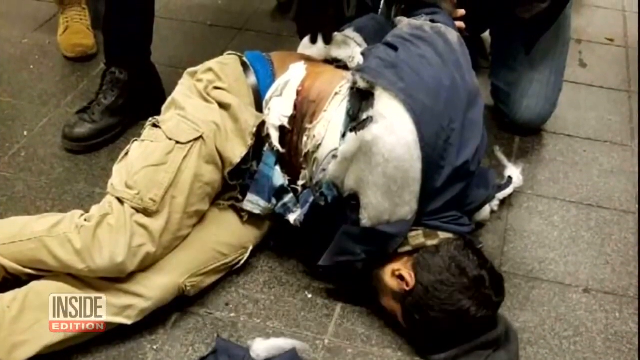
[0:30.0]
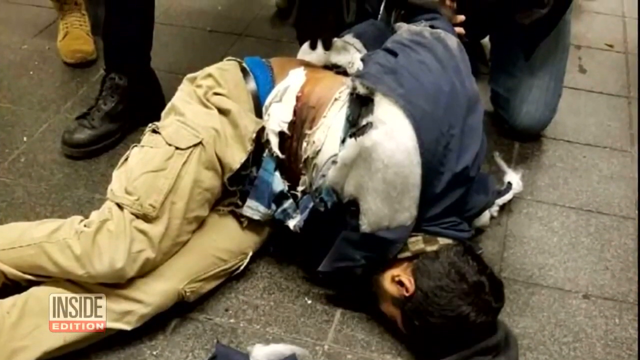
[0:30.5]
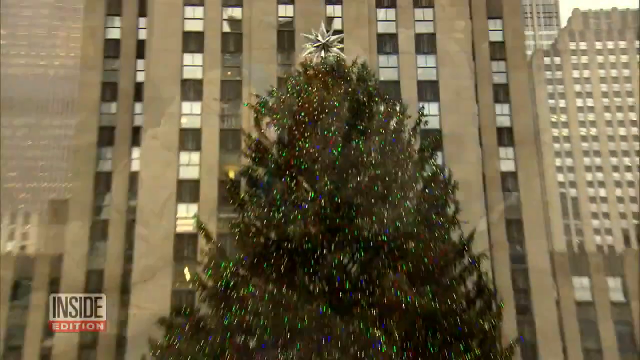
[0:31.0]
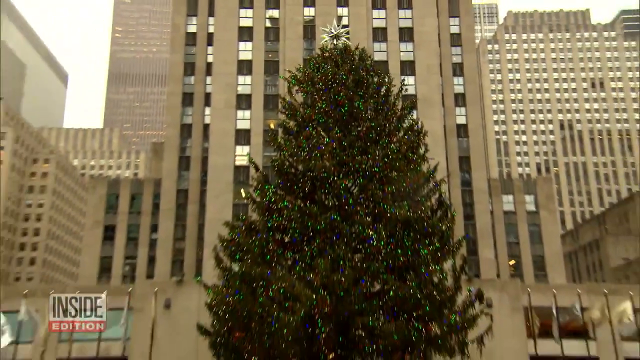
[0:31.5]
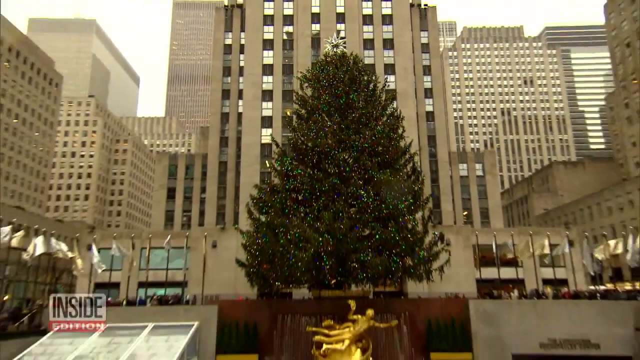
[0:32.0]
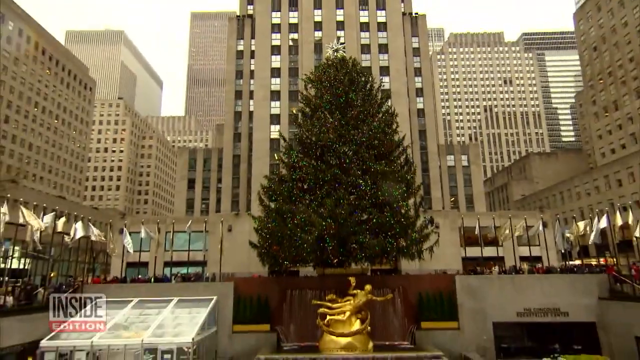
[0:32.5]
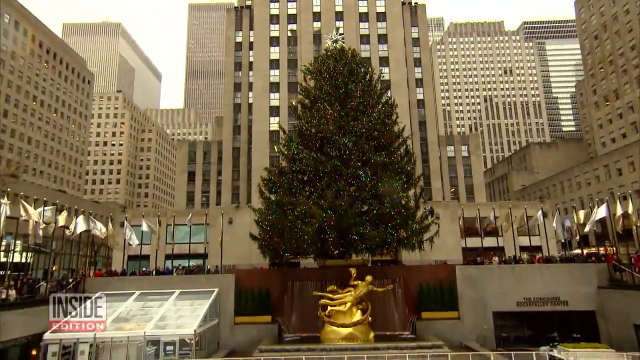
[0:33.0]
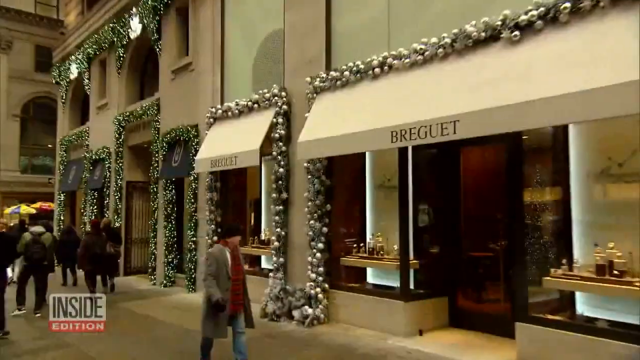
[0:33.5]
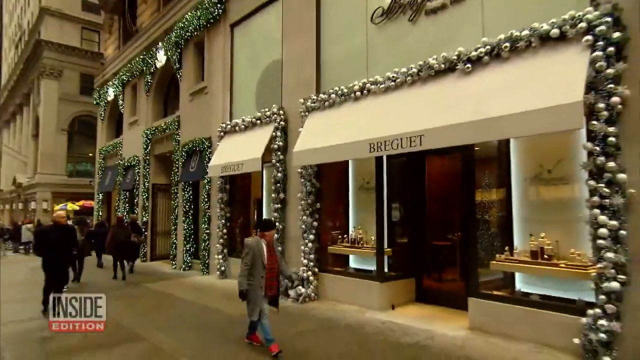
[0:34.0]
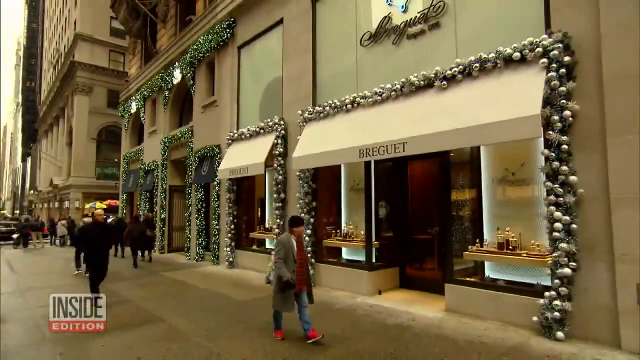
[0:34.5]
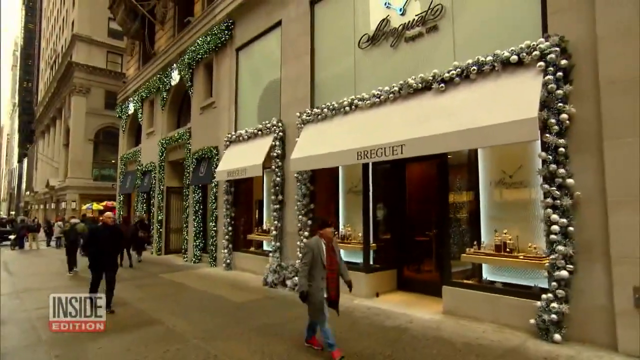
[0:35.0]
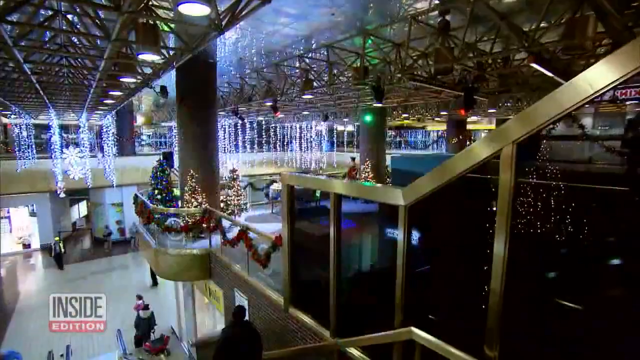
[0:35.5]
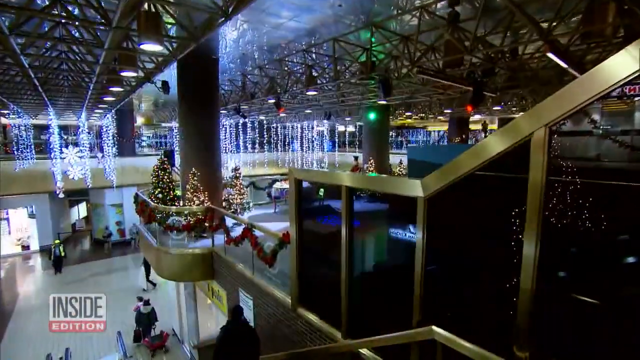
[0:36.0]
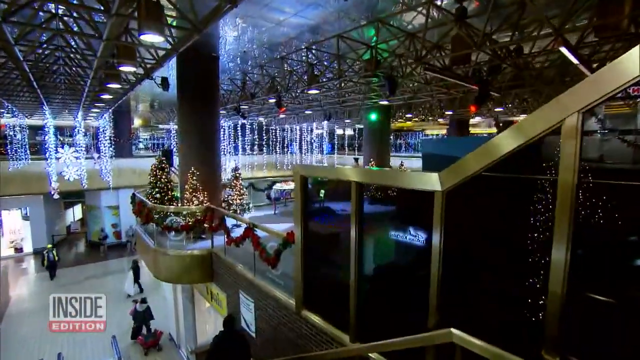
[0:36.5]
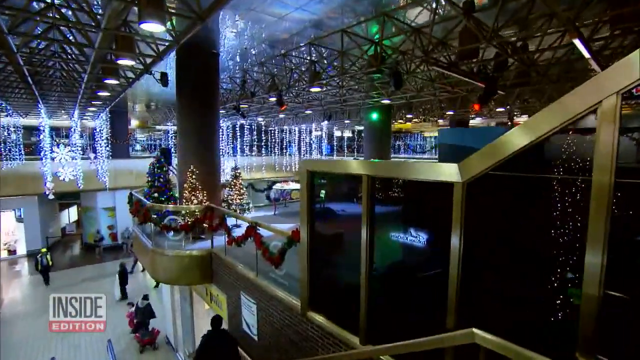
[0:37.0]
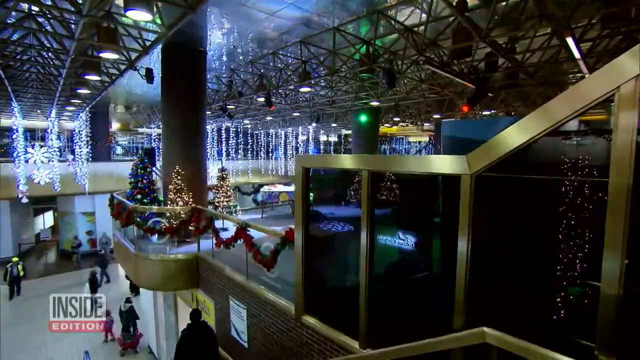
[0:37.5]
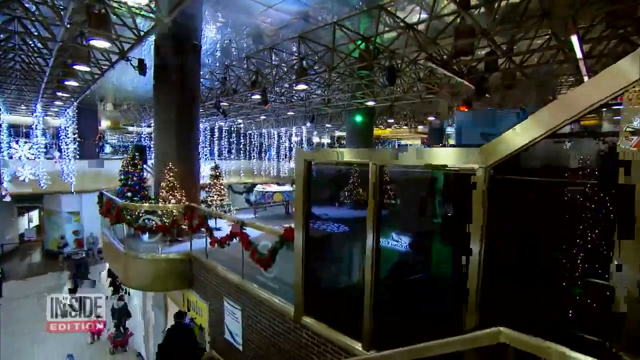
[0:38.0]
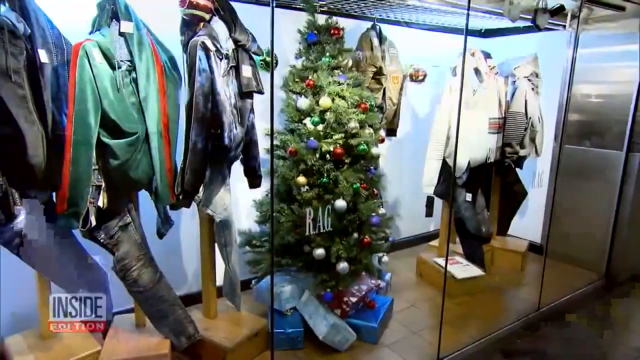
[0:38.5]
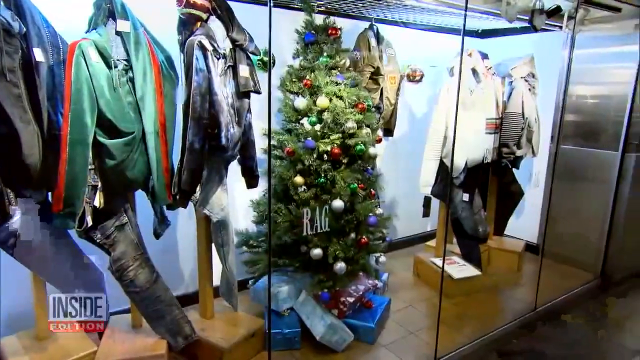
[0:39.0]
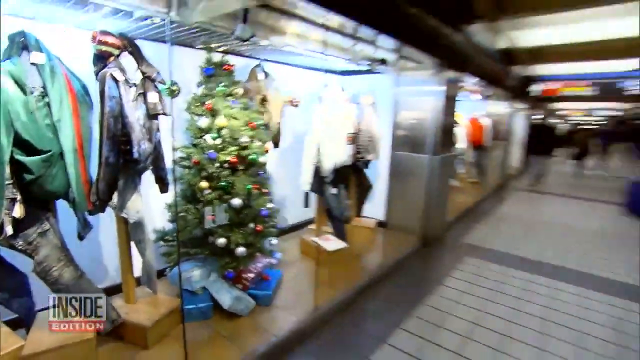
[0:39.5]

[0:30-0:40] The suspect is shown on the floor of the bus terminal in New York City, immediately followed by a number of shots of Christmastime in New York City. A very large Christmas tree stands outside some shopping areas. The storefronts of several stores are shown, including one whose name is possibly spelled B-R-E-G-U-E-T. Other people shop in a busy shopping area with glass storefronts through which the goods for sale are visible, and there are shots inside a mall or shopping area decorated with tinsel, lights and smaller Christmas trees everywhere. The Inside Edition logo is in the lower left corner of the video as it shows many different scenes of shopping, Christmas trees and people doing ordinary Christmastime activities in New York City.